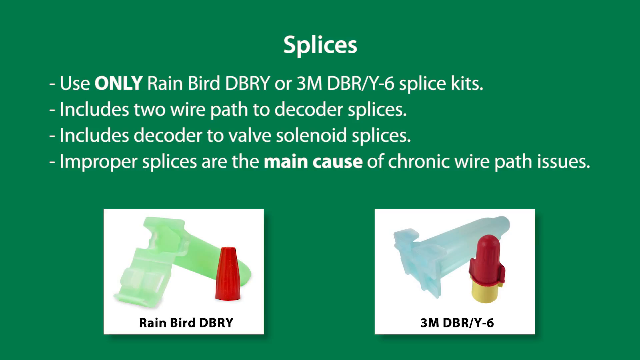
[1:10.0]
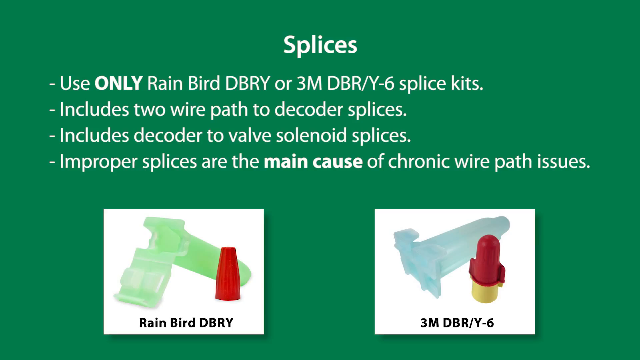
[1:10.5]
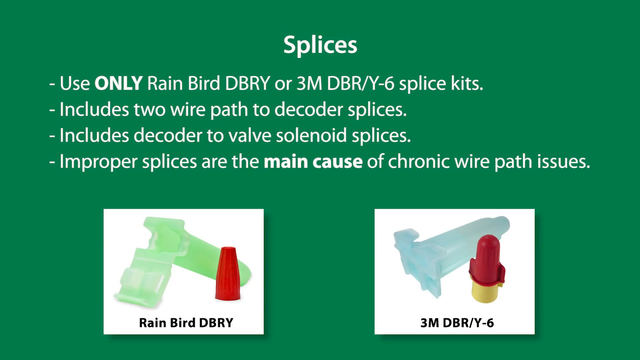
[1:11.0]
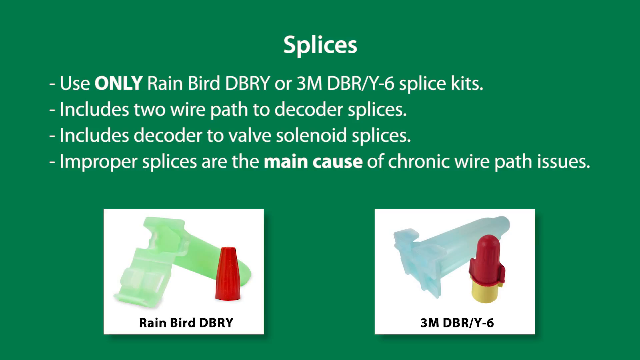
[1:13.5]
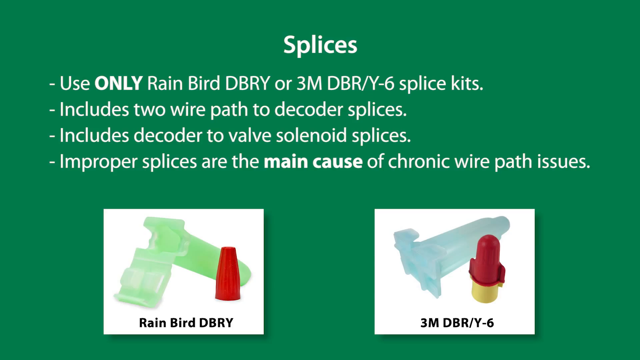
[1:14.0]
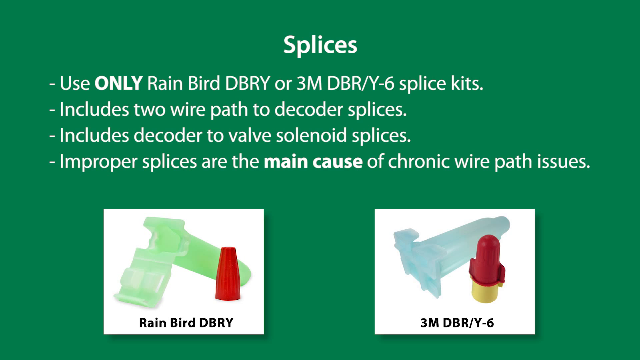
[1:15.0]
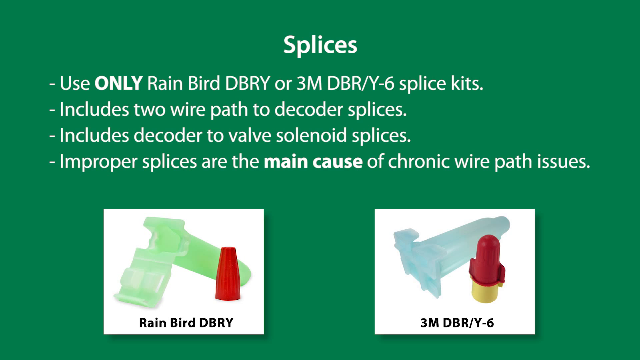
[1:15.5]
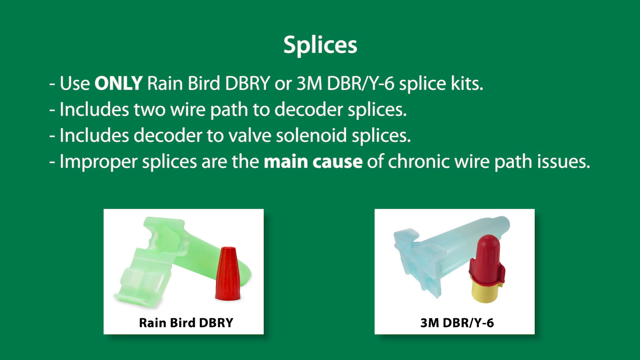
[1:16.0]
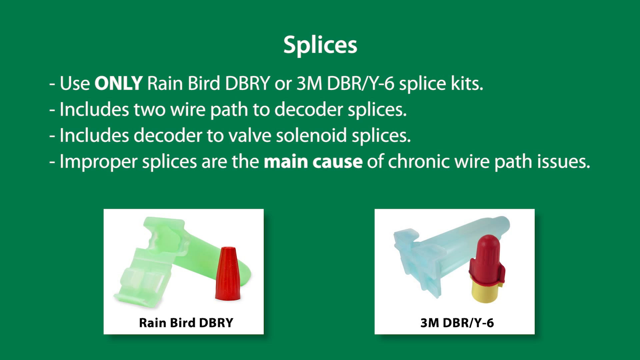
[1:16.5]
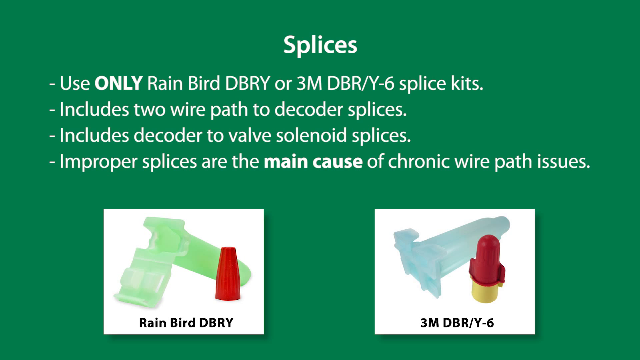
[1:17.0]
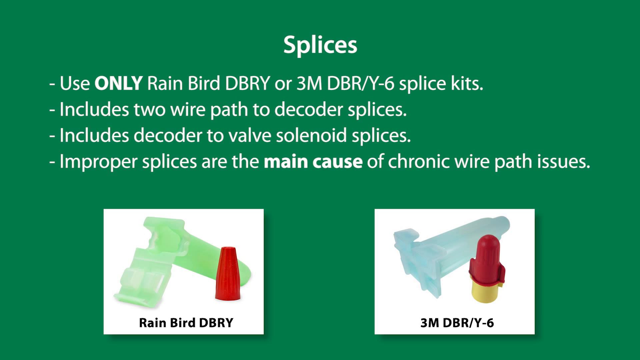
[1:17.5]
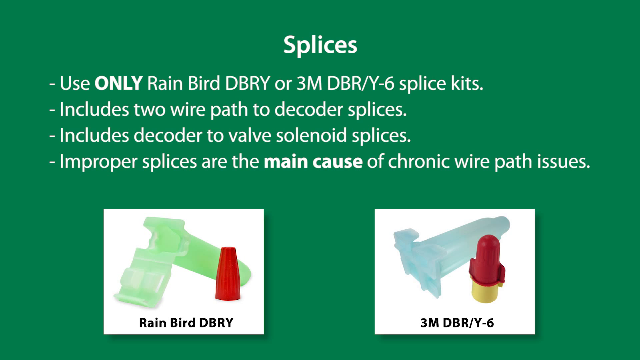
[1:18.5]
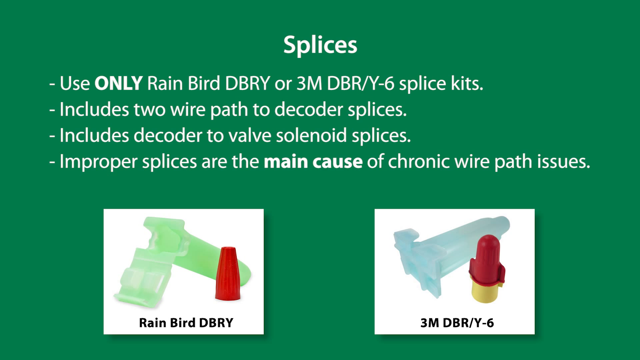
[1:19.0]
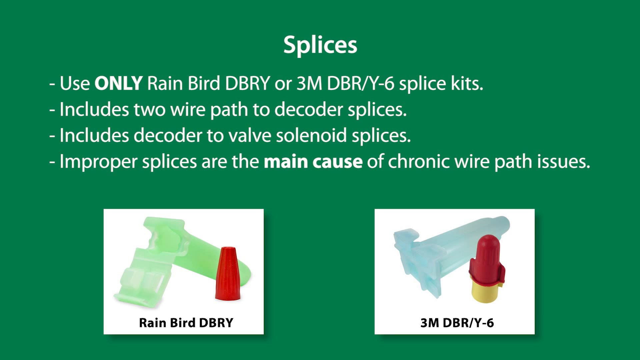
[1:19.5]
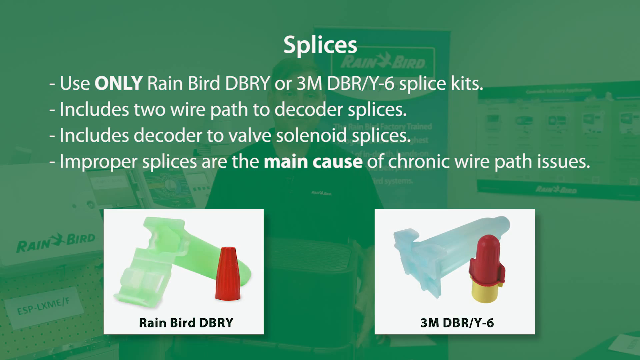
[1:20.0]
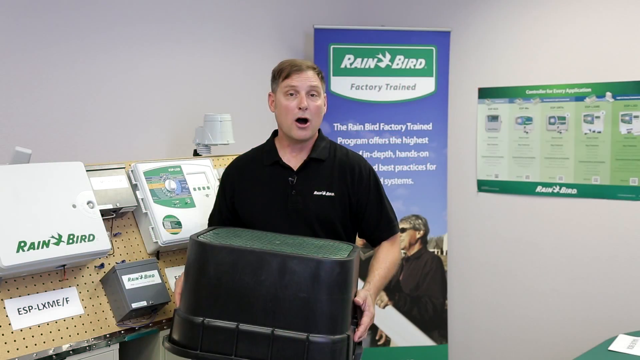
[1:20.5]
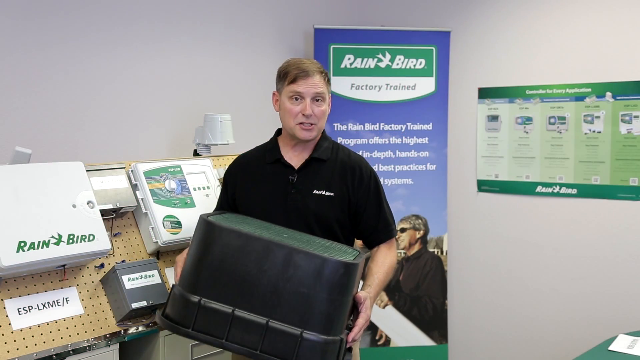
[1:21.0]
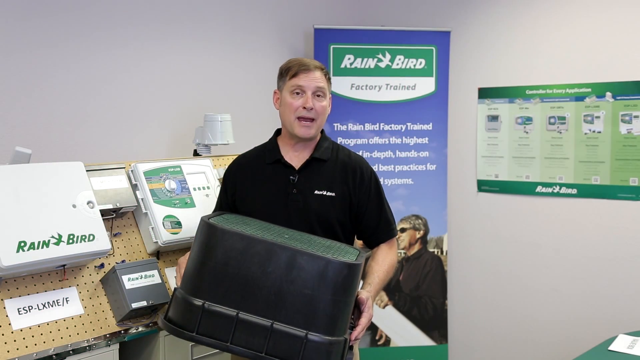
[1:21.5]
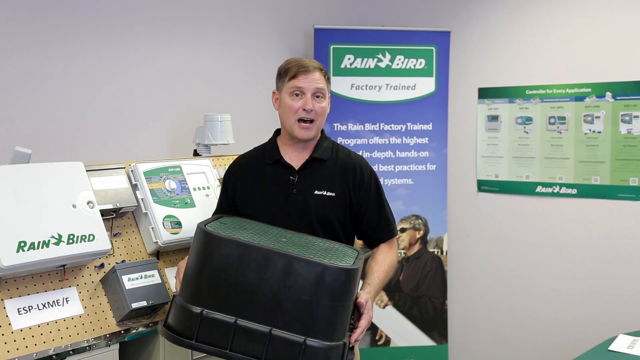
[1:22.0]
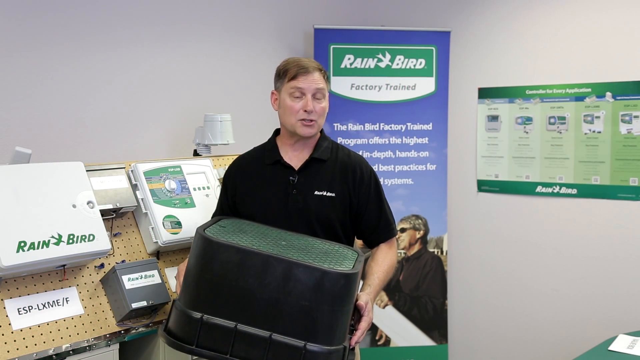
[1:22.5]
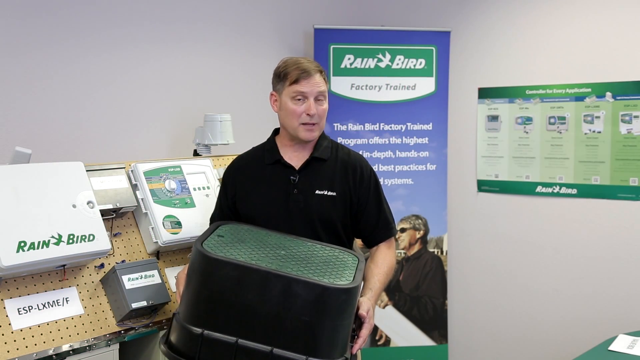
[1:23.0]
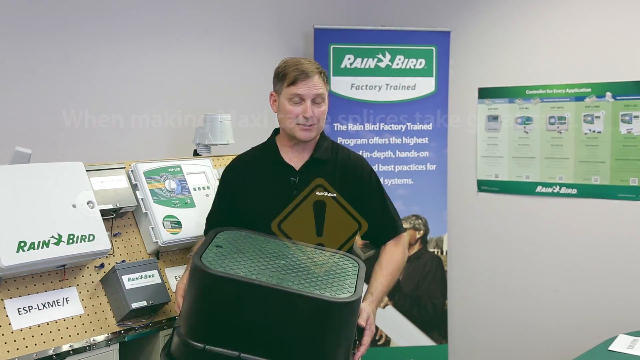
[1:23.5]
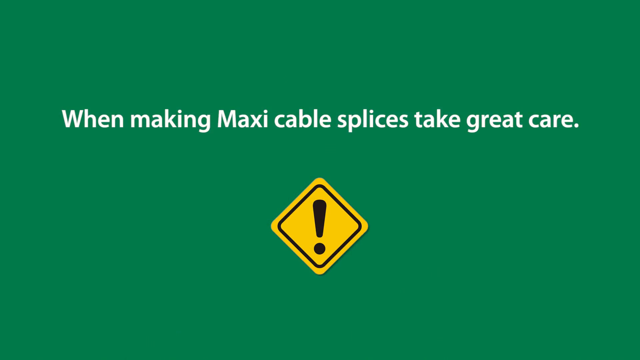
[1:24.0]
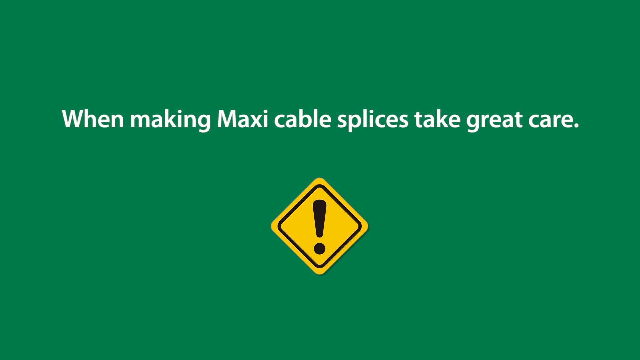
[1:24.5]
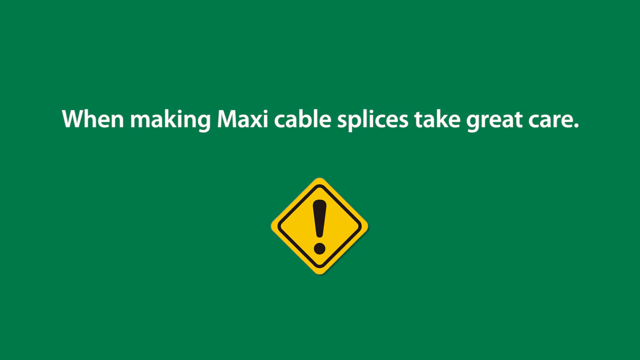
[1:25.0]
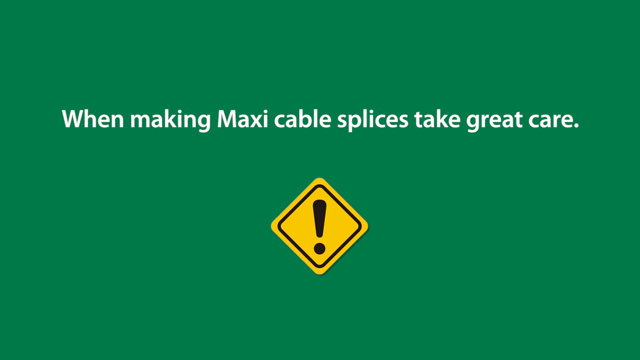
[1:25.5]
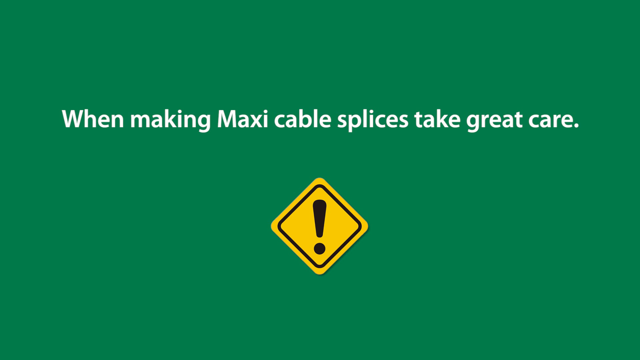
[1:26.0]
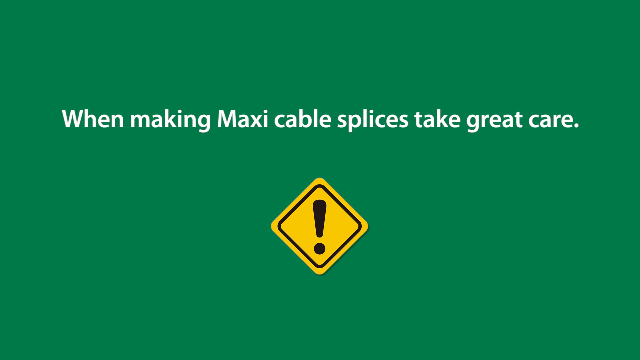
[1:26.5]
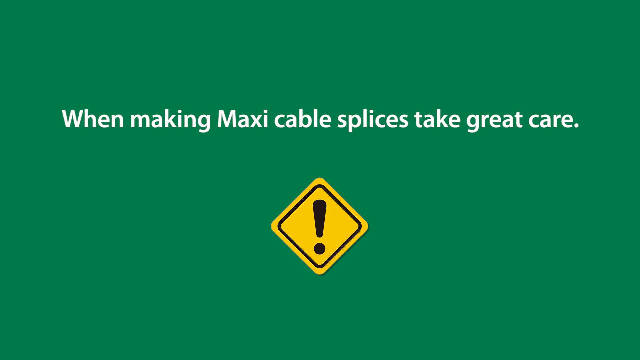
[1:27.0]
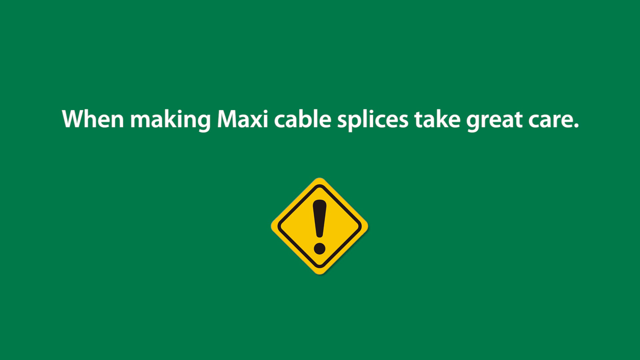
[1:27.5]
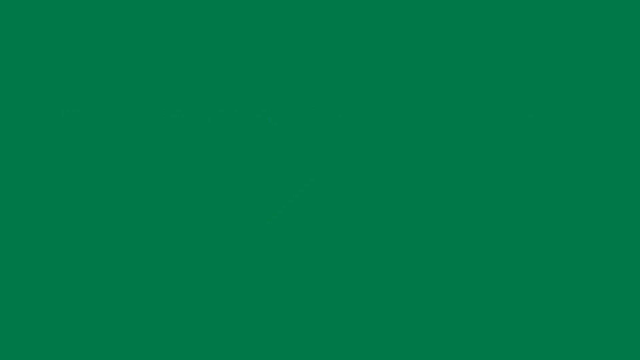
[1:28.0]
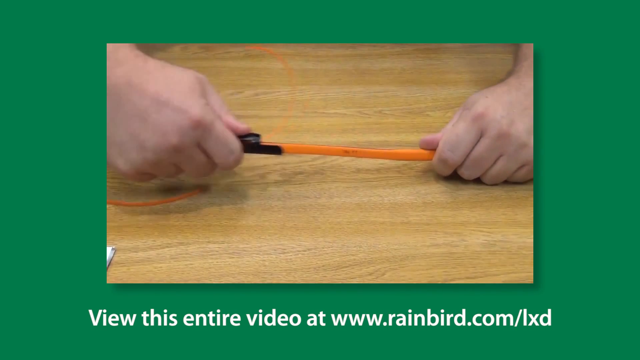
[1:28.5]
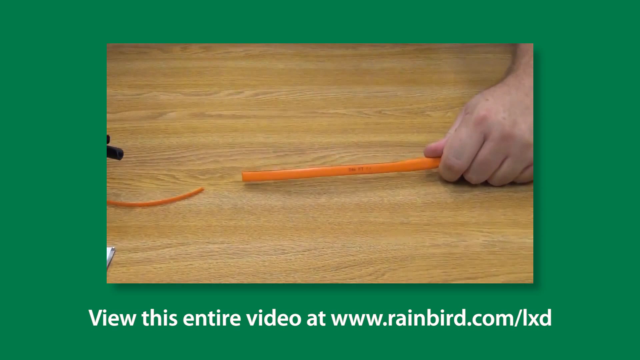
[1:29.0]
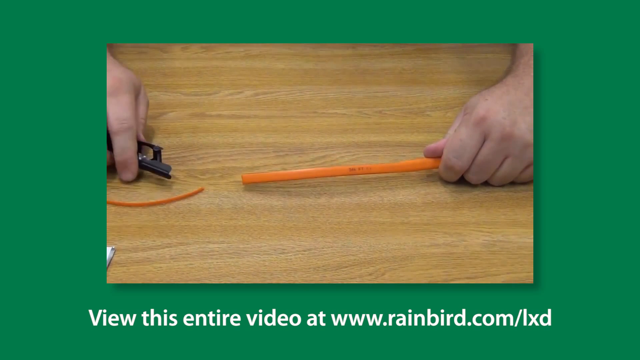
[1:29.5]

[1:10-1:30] The splices screen reads "Use only RainBird DBRY or 3M DBR/Y-6 splice kits," "Includes two-wire path to decoder splices," "Includes decoder to valve solenoid splices," and "Improper splices are the main cause of chronic wire path issues." At the bottom, the RainBird DBRY image shows a green device that appears to have a handle, with a red cap next to it, and the 3M DBR-Y-6 image shows a blue device next to a little cap that looks like a fire hydrant, with a yellow bottom and a red top. The man speaking to the camera now holds what looks like a black plastic tub upside down, with a dimpled green lid. A screen then reads "when making maxi cable splices take great care" beside a yellow and black caution sign with an exclamation point. Next, an inset video on a green background shows someone's hands holding an orange wire, with a wire in the left hand, while the right hand slides a black cutting device. This is done on a wood table, and the orange wire is then spliced, with one piece of the wire lying on the table and the other in the left hand. Text under the video reads "view this entire video at www.rainbird.com."